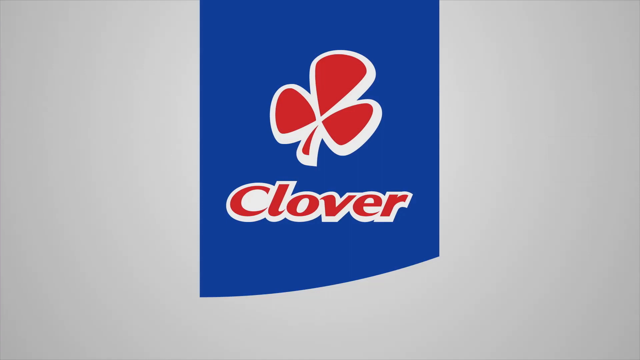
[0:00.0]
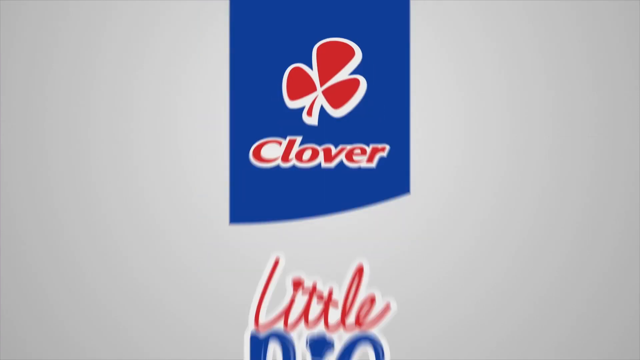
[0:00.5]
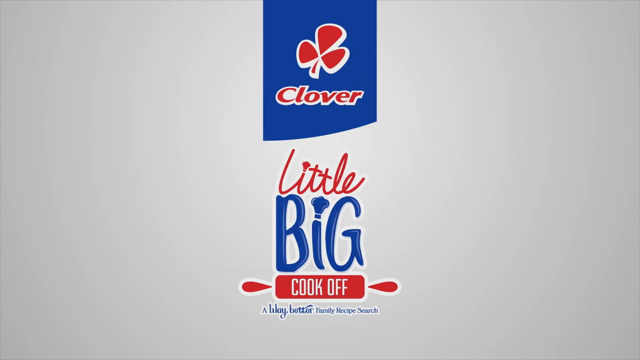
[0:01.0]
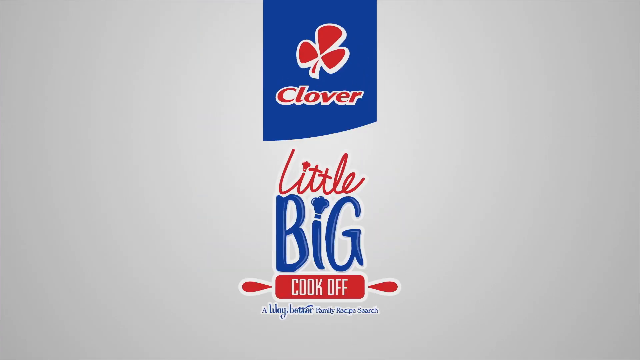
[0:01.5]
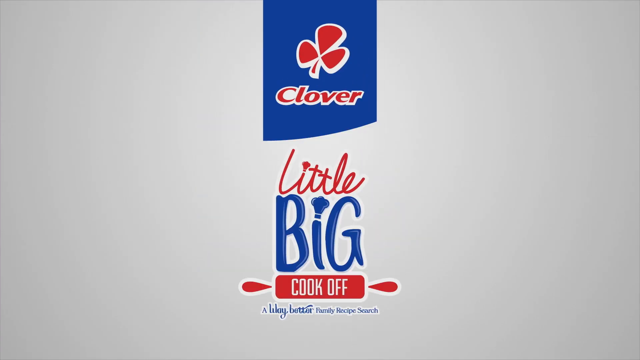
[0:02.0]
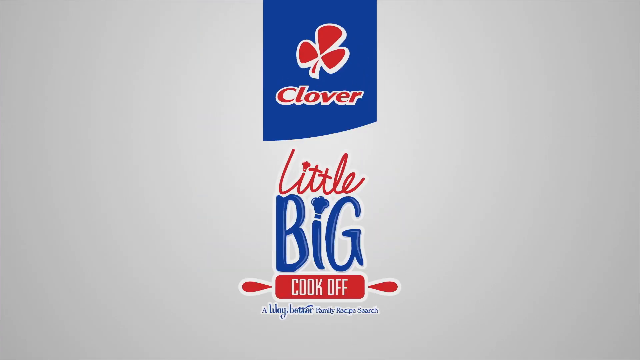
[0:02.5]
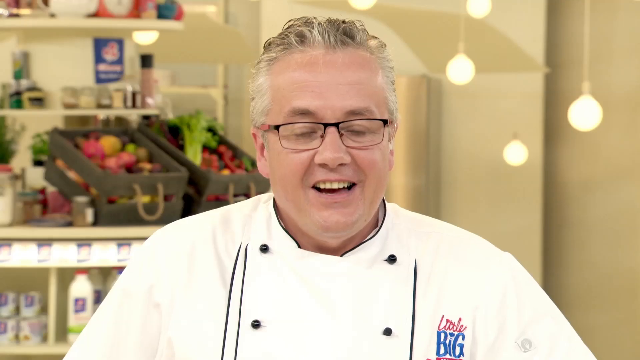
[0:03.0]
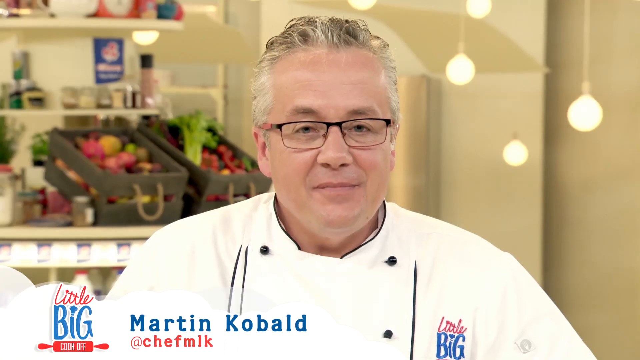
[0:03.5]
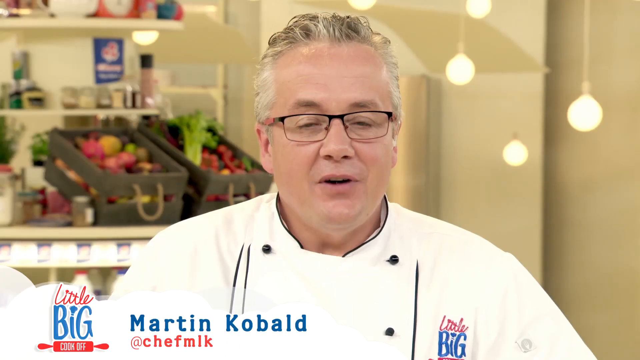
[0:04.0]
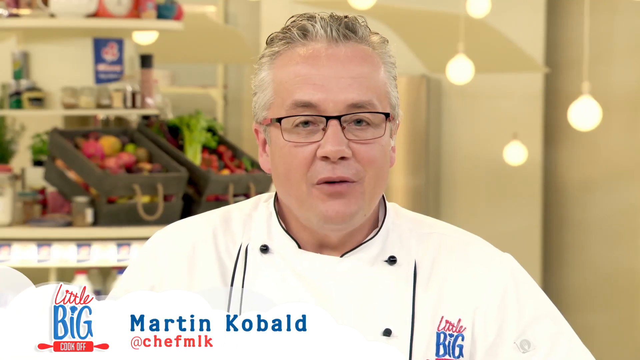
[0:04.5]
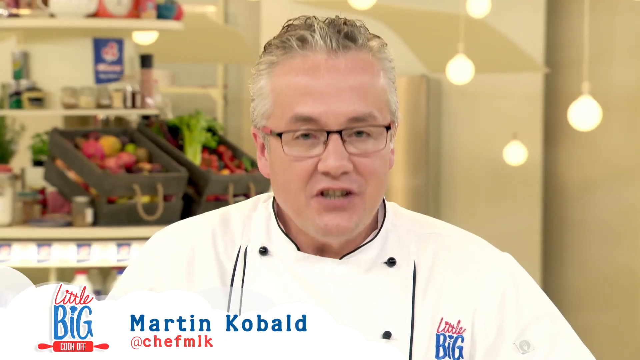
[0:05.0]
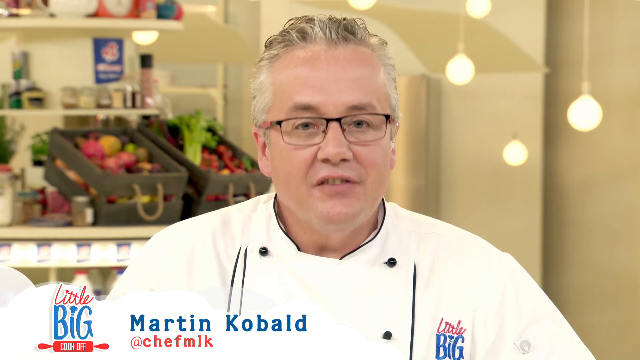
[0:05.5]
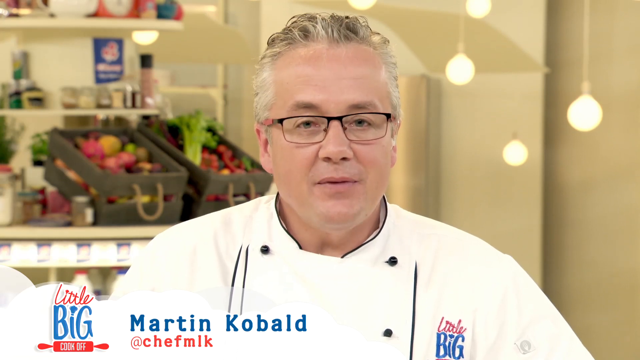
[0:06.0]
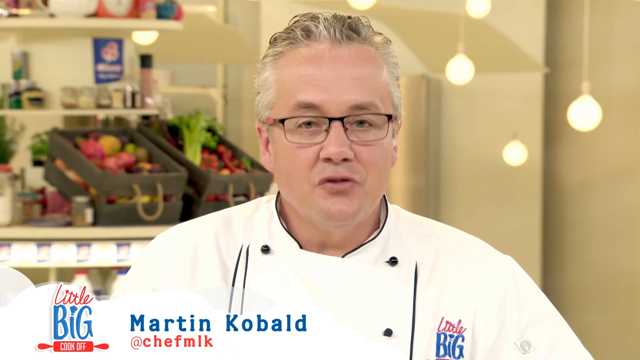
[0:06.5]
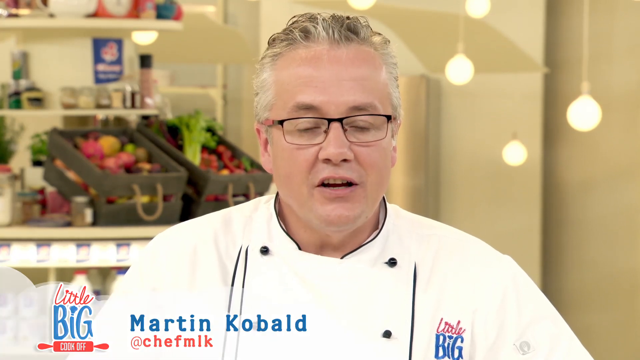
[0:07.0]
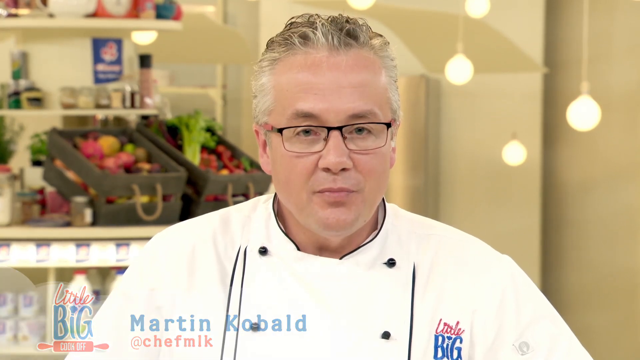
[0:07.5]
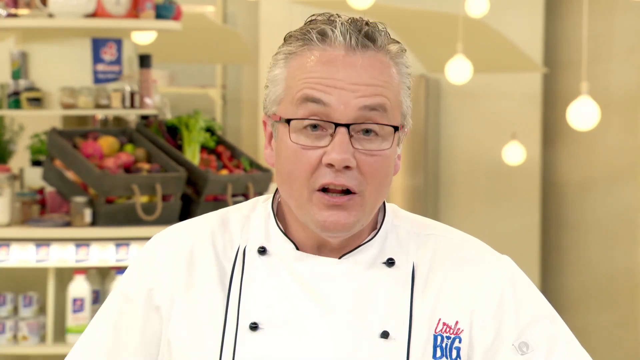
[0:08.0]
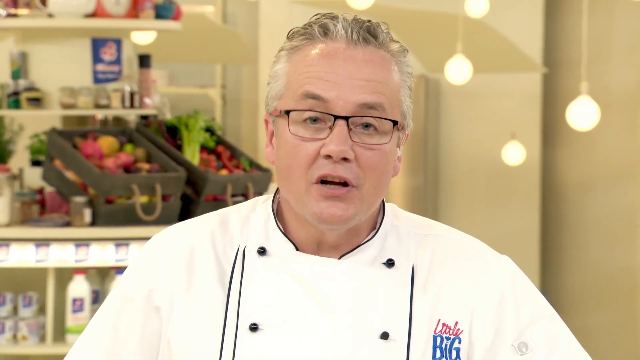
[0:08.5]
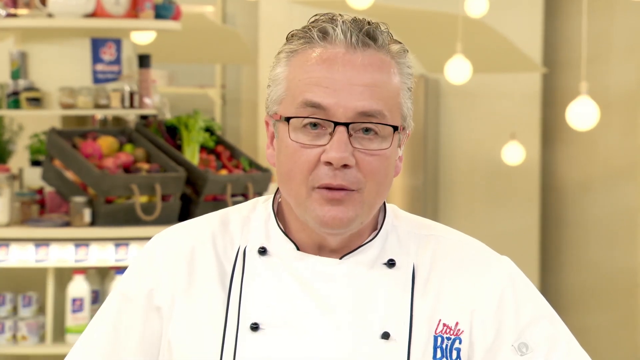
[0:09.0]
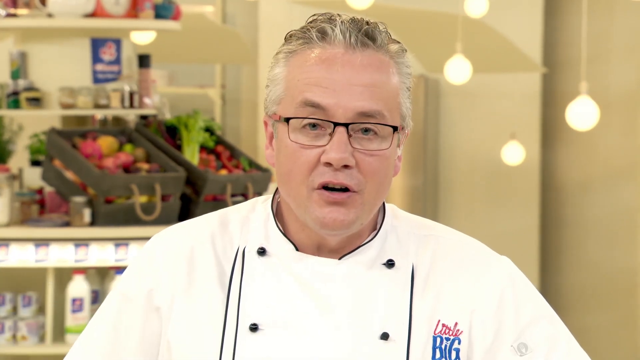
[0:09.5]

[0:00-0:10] The video opens on a close-up of what looks like a logo: a blue background with a red clover outlined in white, and below it, in the same style, the word "clover". The logo zooms out, and below it cursive text reads "little big cook-off". The word "little" is red with a chef's hat above the i, the word "big" below it is blue with a chef's hat above the i, and "cook-off" is made to look like it is inside a rolling pin. A white man with gray-white hair appears, wearing dark-framed glasses and a white chef's jacket with black buttons, seen from the shoulders up. Blue text at the bottom of the screen reads "Martin Kobold" and "@ChefMLK", with the little big cook-off logo to its left. The background appears to be a kitchen setting, with wooden crates holding different types of produce. The man looks straight at the camera and speaks, nodding his head a little as he talks.